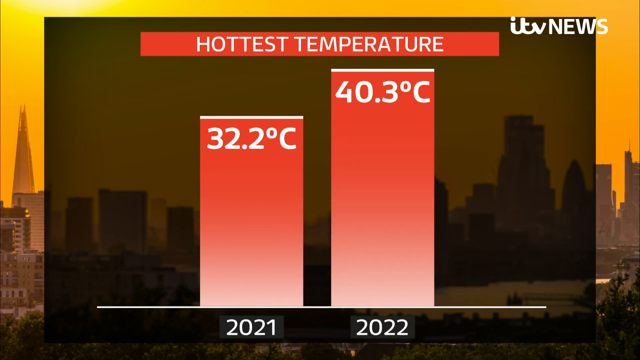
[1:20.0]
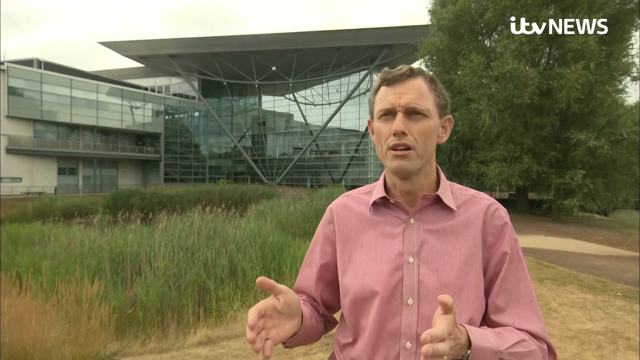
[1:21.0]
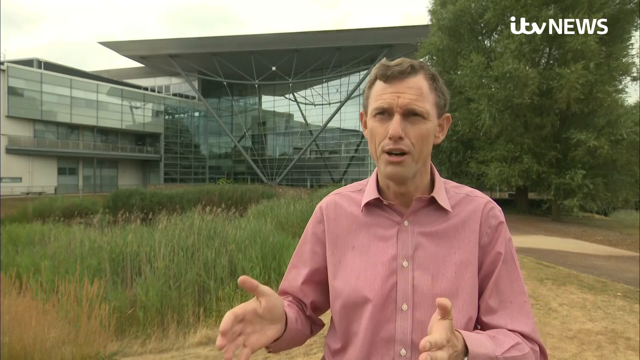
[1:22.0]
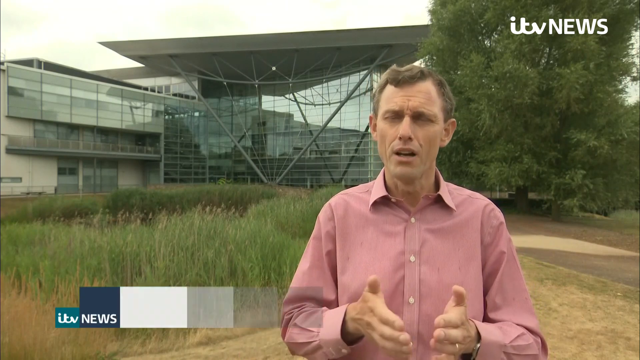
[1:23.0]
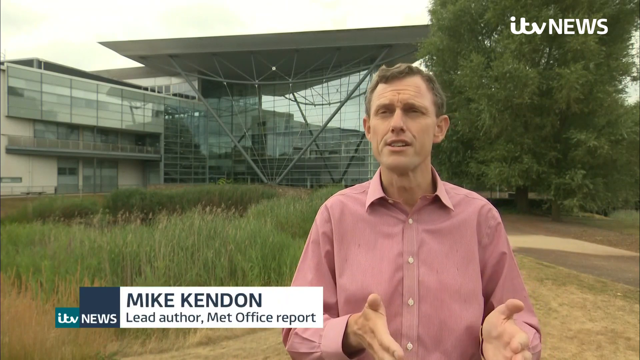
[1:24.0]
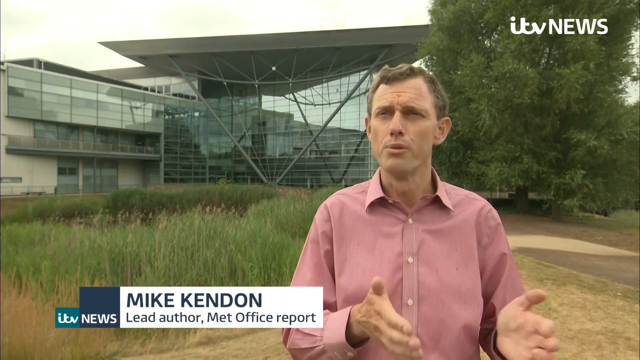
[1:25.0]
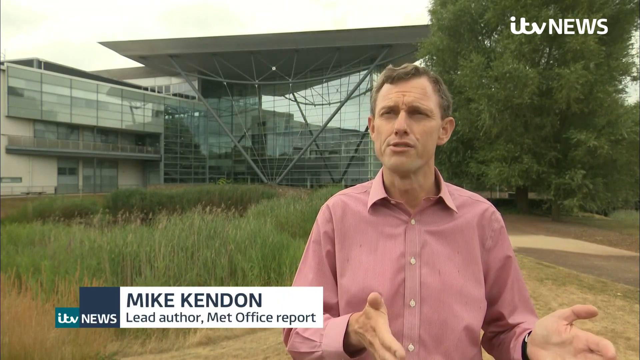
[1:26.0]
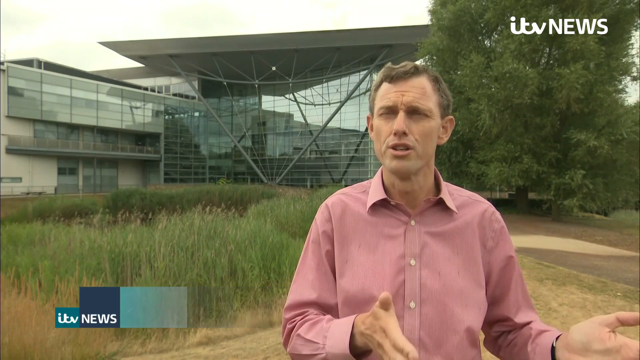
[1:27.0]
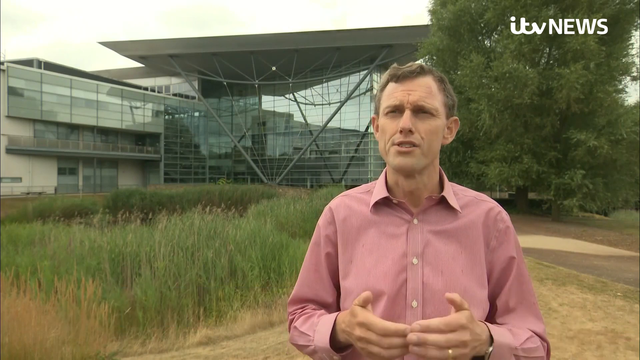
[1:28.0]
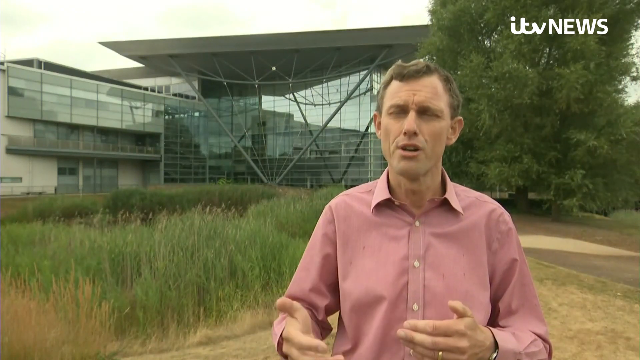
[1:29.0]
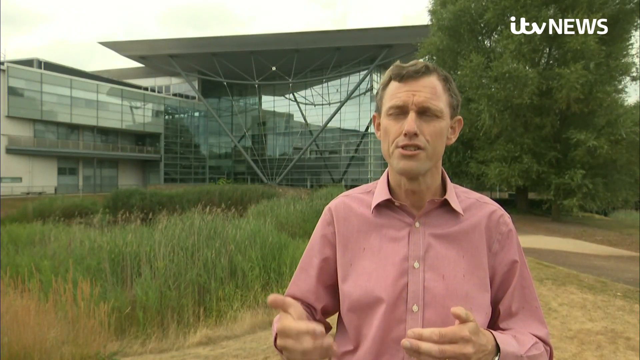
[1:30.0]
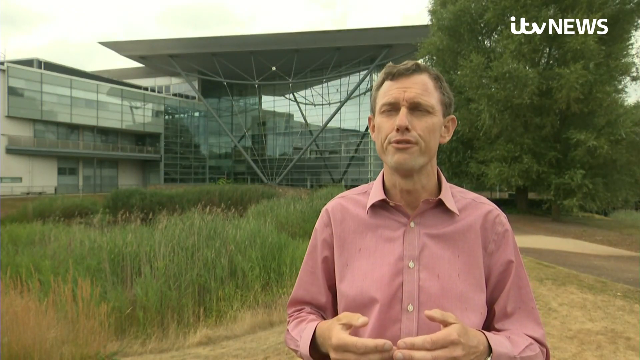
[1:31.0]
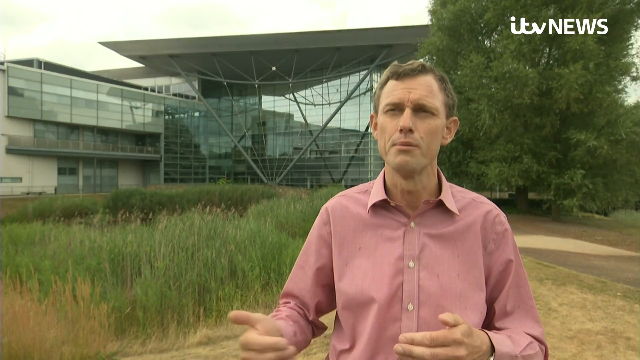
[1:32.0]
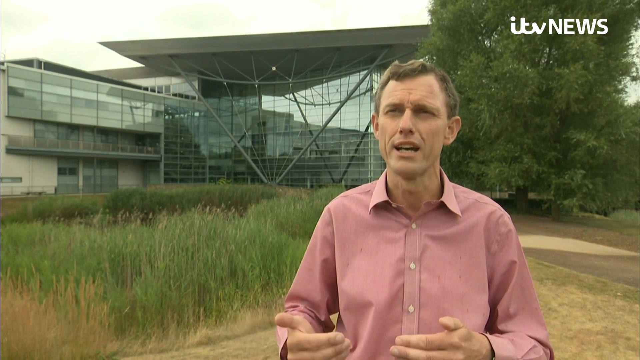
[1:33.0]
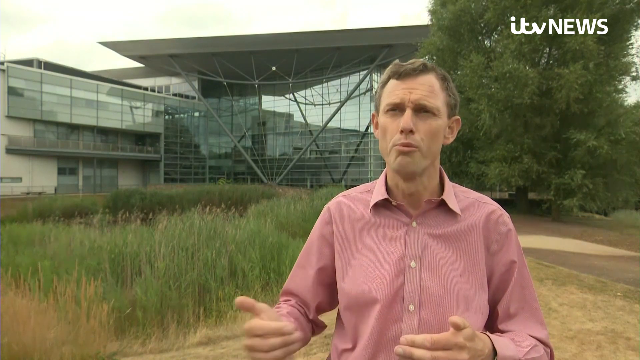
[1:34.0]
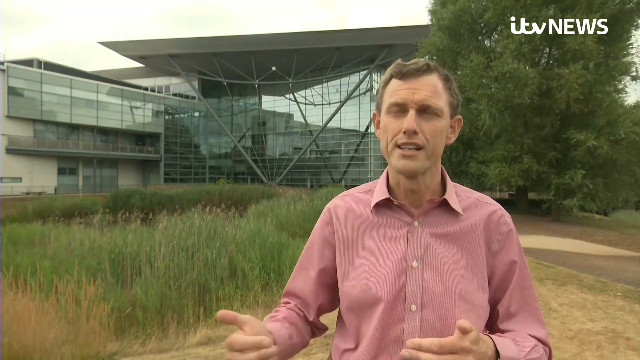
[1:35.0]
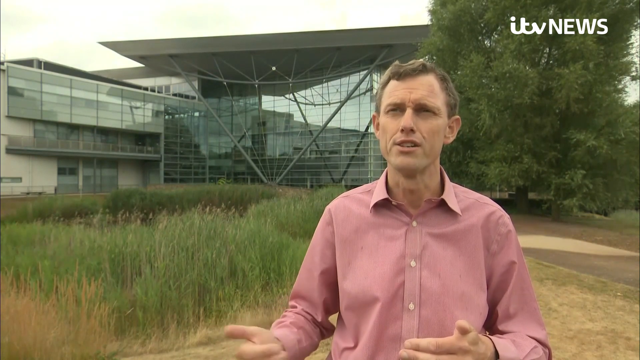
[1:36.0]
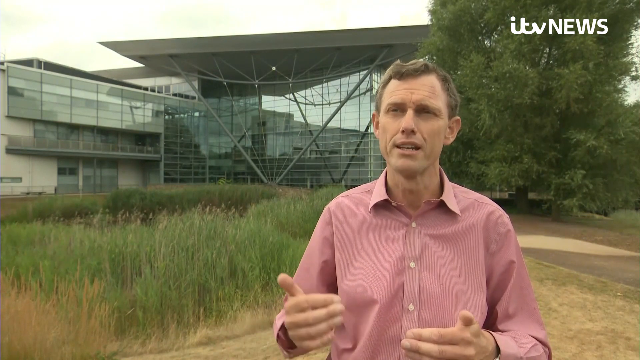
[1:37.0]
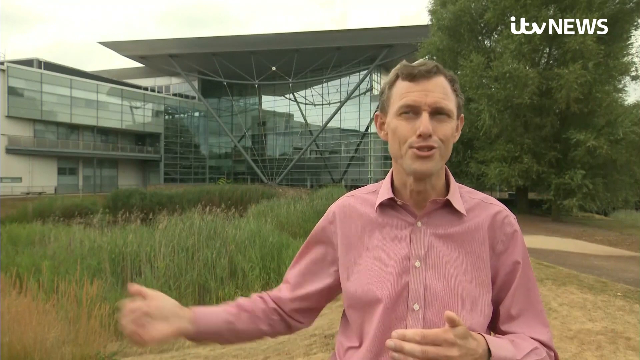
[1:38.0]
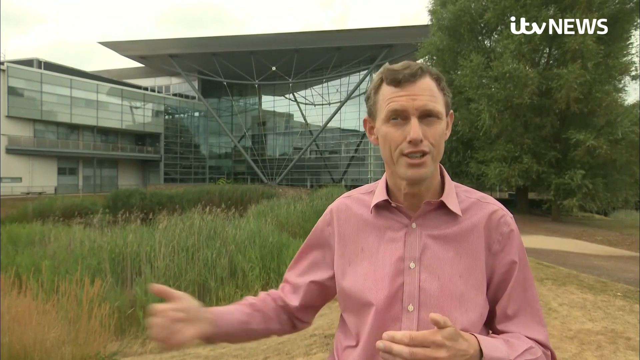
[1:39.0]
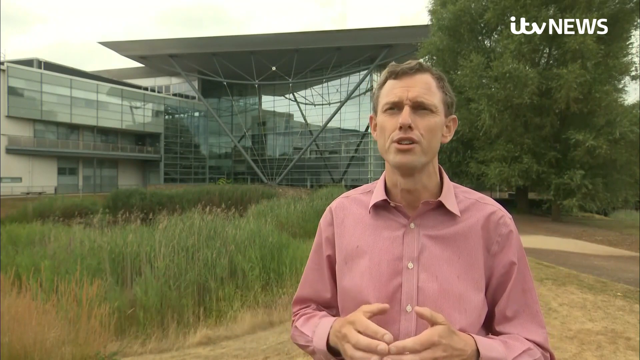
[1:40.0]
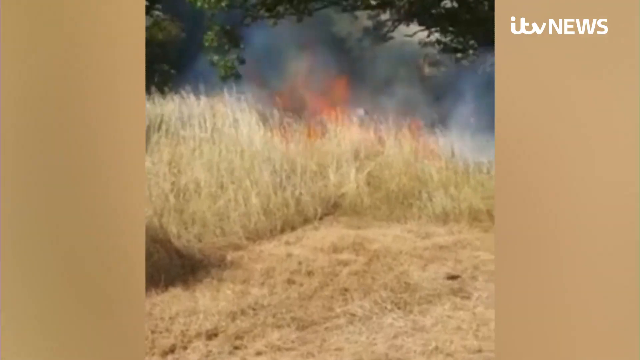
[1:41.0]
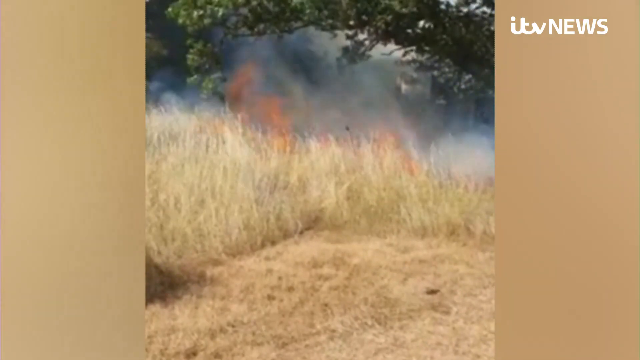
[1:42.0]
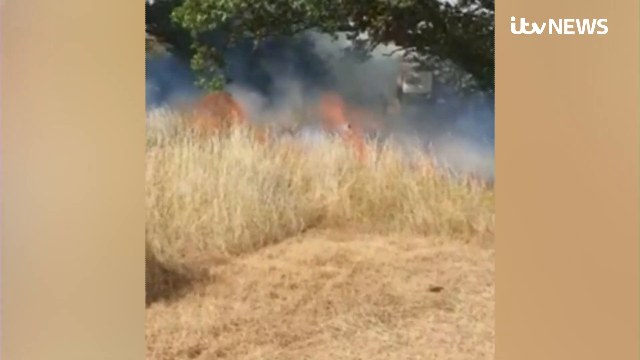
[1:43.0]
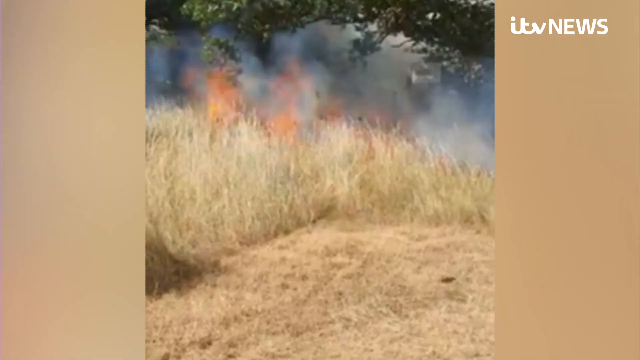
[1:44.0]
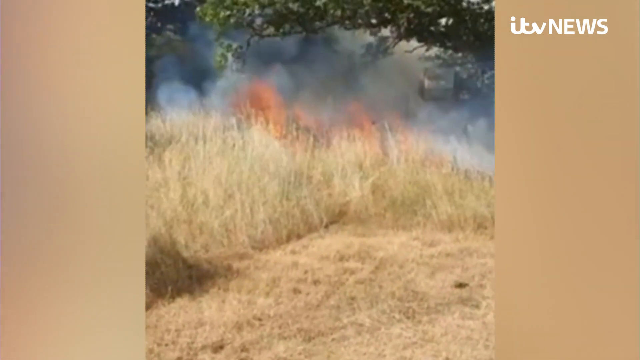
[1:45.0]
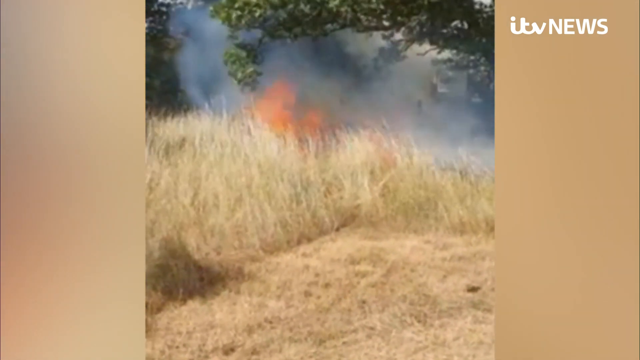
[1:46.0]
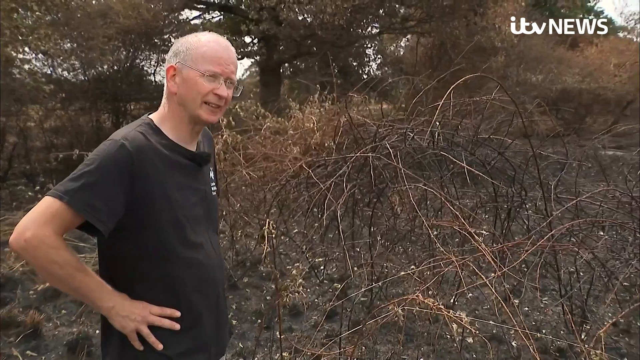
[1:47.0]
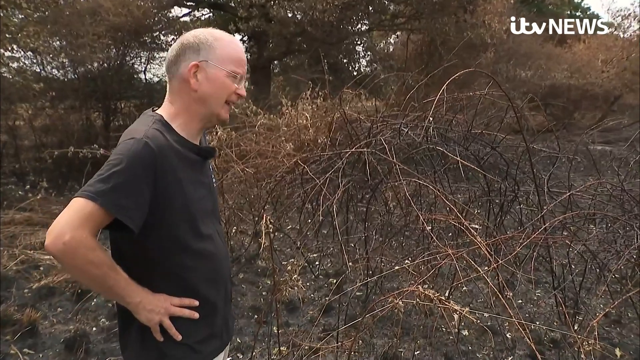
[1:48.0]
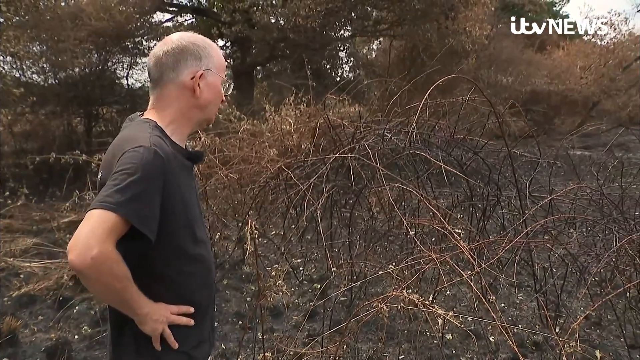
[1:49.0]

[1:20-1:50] A man stands outside a building that looks like some type of factory, speaking to the camera. He wears a pink button-front shirt and has short brown hair. Tall grasses are in front of the building, and there is a tall green tree on the left and on the right. His name appears at the bottom of the screen: "Mike Kendon, lead author, Met Office Report". The "itv News" logo is in the upper right. A field of tall dry grass is then shown on fire, with flames and smoke in the grass and some limbs of a green tree in the foreground. Next, a man in a black tee shirt stands in front of a field covered with dried brush, with some trees behind the field; he stands with his hands on his hips, facing toward the right.